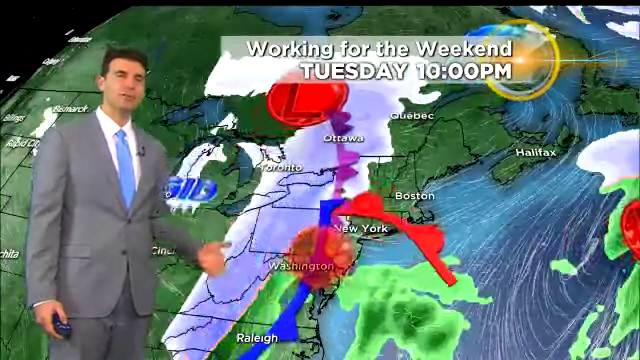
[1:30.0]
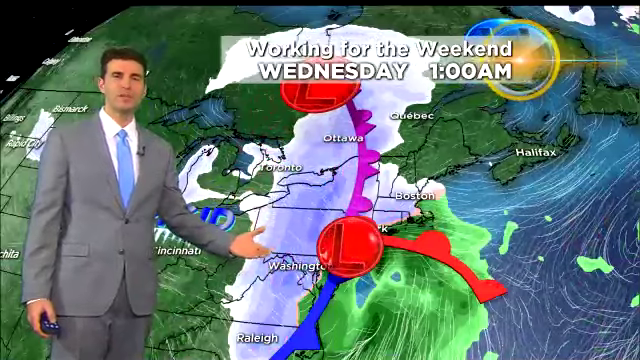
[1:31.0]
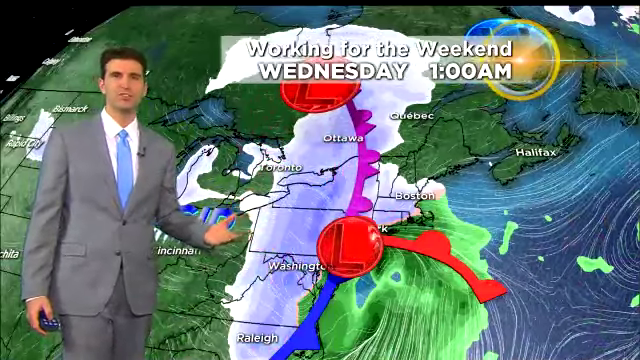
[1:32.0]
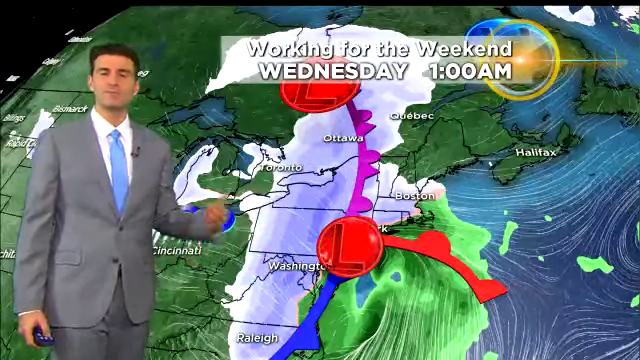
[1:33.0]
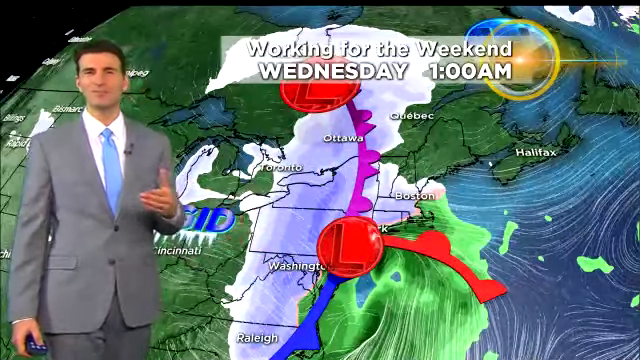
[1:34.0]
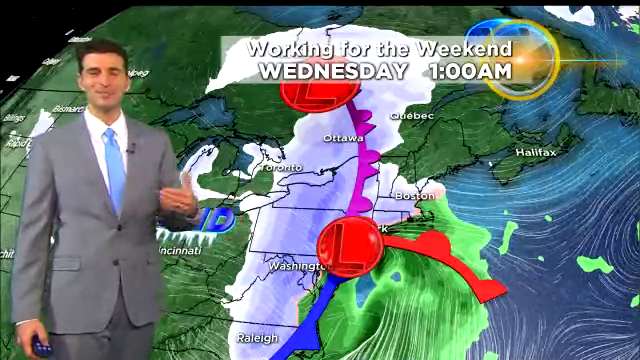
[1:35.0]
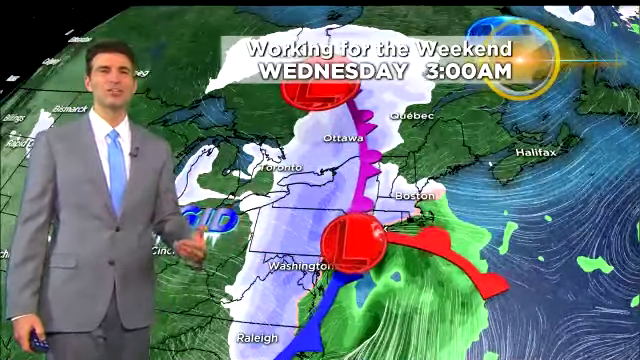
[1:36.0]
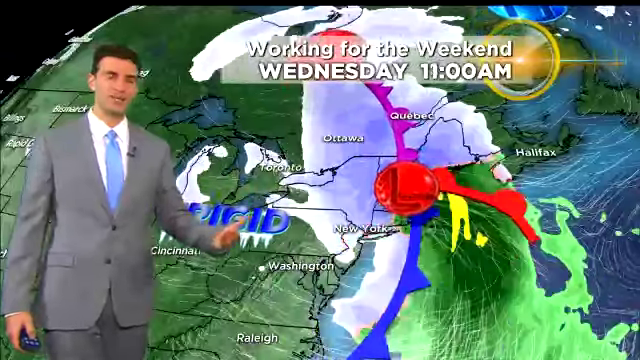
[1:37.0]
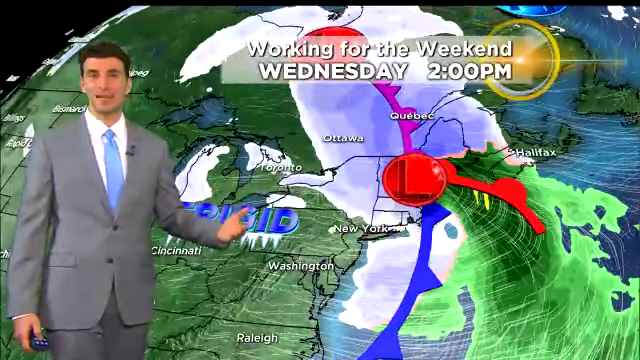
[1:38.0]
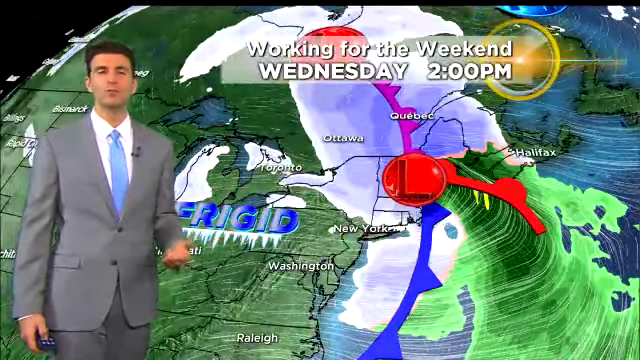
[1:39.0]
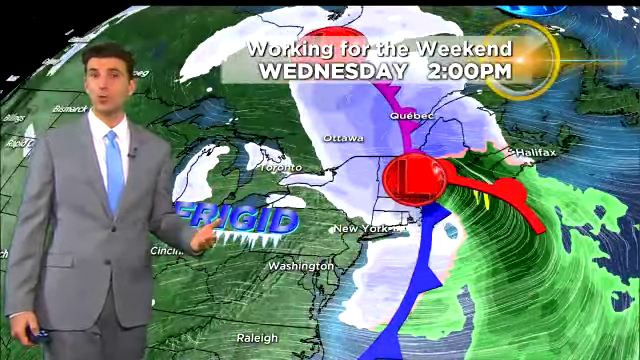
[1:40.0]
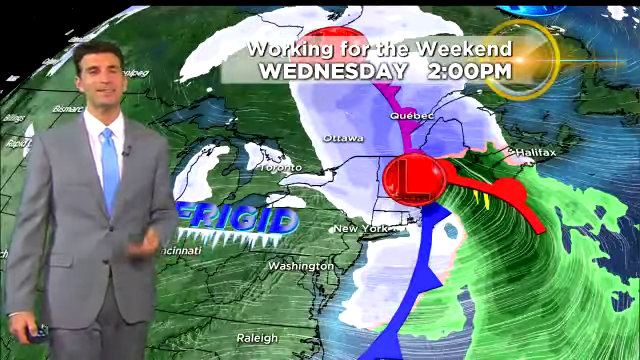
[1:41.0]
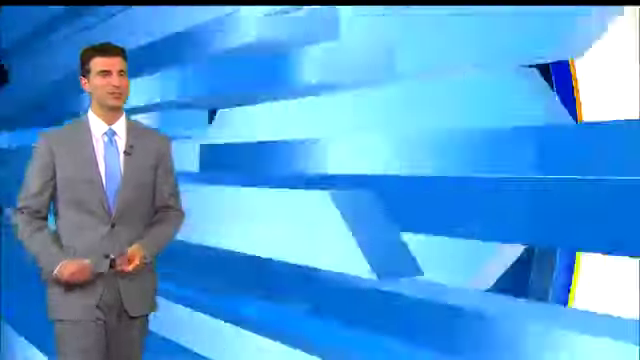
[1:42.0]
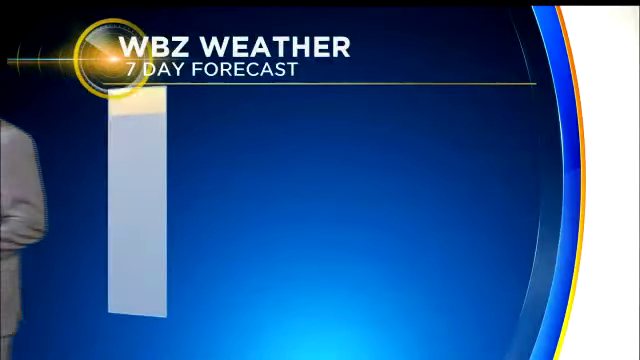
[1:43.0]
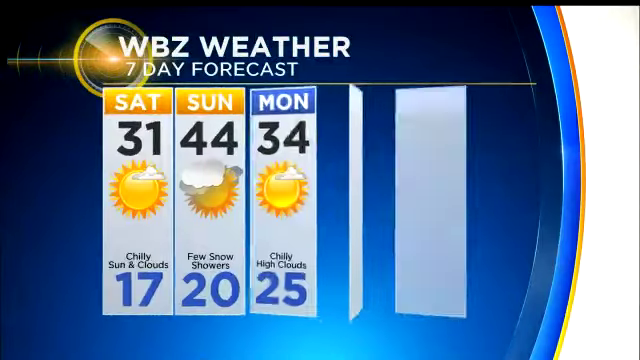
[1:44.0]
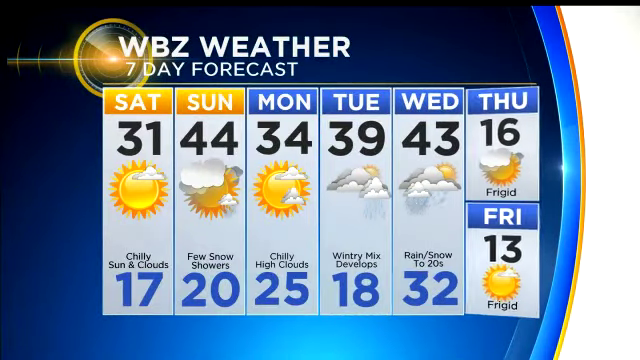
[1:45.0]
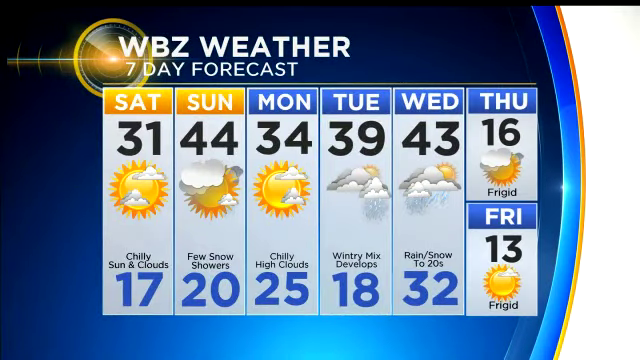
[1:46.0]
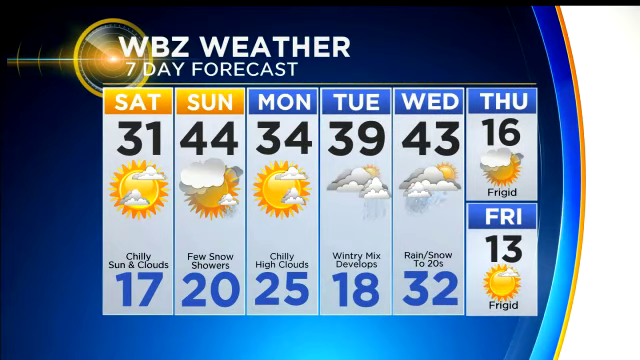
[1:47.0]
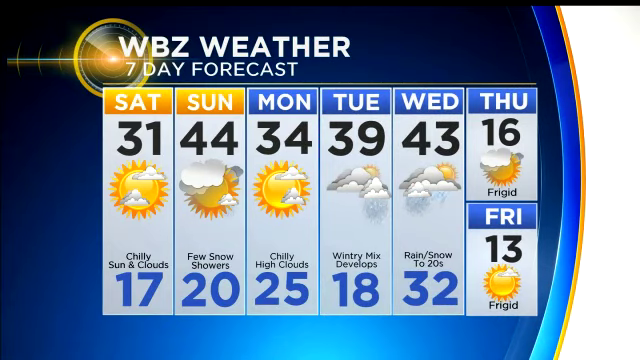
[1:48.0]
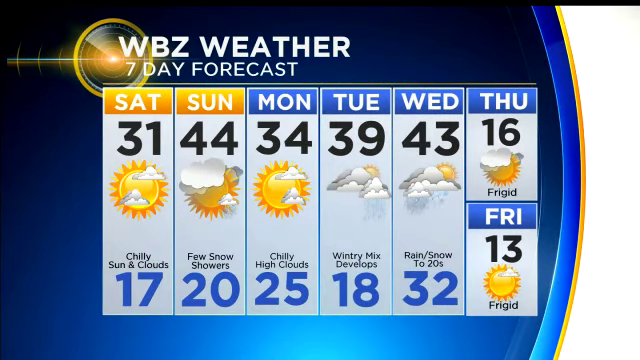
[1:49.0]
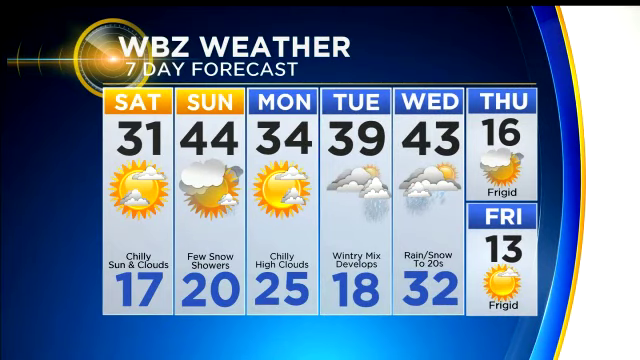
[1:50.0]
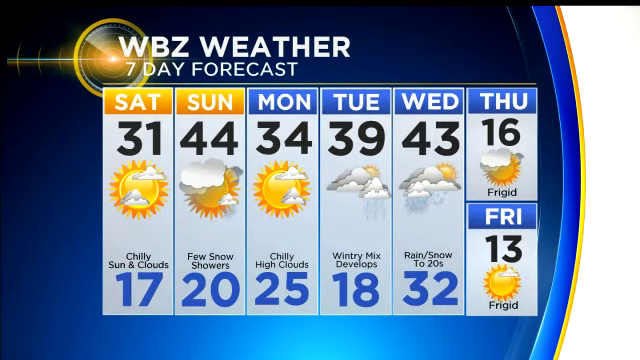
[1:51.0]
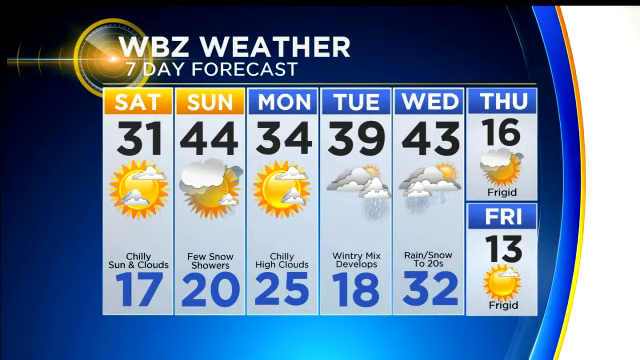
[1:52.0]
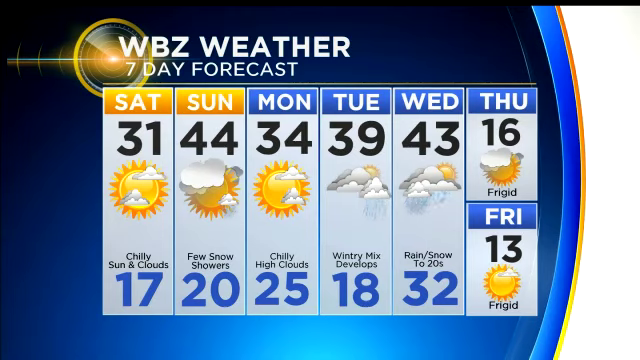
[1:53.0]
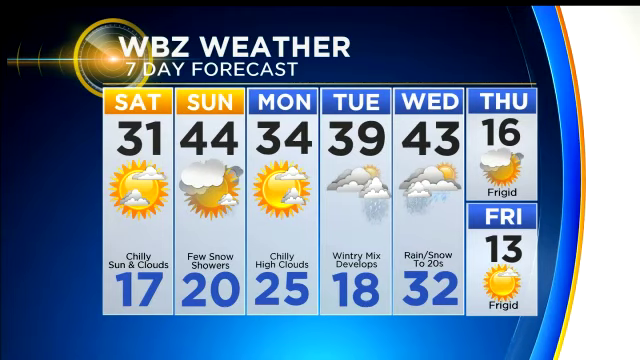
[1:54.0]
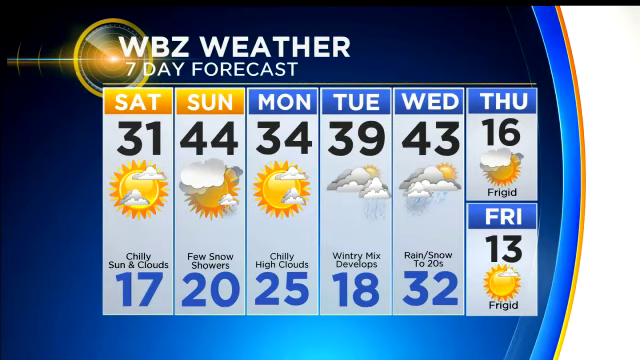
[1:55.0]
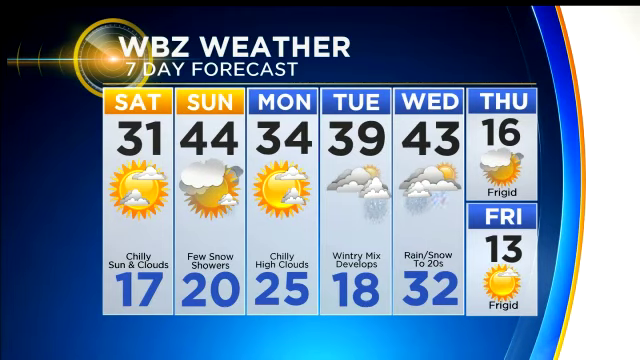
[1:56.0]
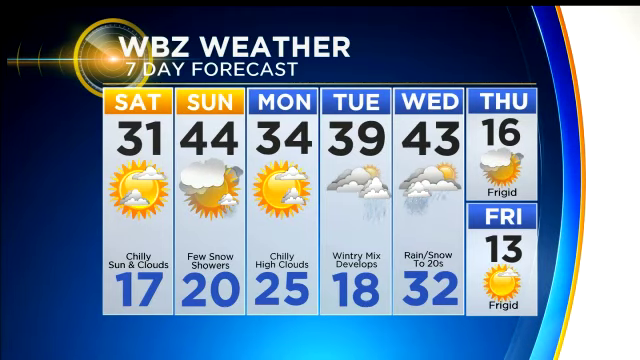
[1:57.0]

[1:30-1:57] The presenter continues to go over the conditions for the affected states and region. WBZ weather is shown as the source. A seven-day forecast appears: Saturday the 31st with 17 and chilly; Sunday with 44 and 20 and few snow showers; Monday with 34 and 25, chilly, high clouds; Tuesday with 39 and 18 and a mix developing; Wednesday with 43 and 32, rain, snows, to 20s; Thursday with 16, frigid; and Friday, frigid, with 13 degrees.